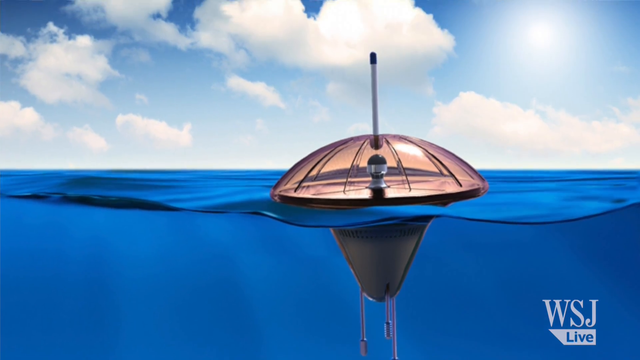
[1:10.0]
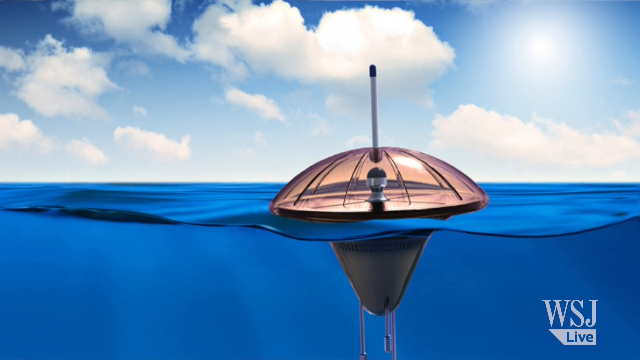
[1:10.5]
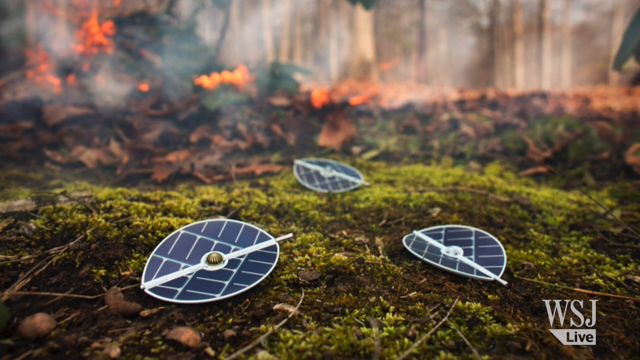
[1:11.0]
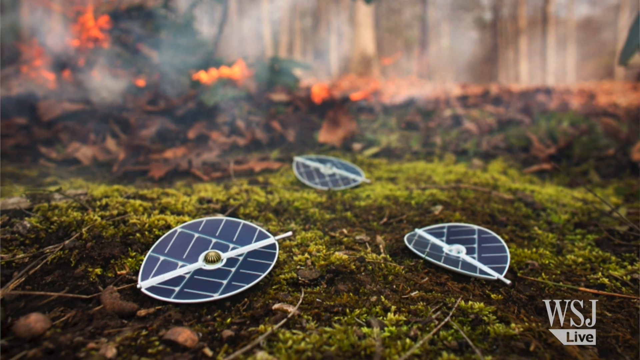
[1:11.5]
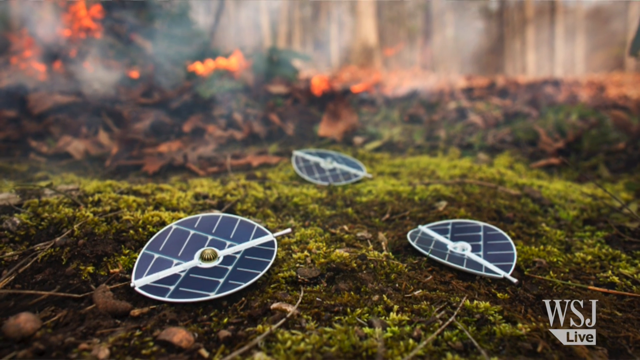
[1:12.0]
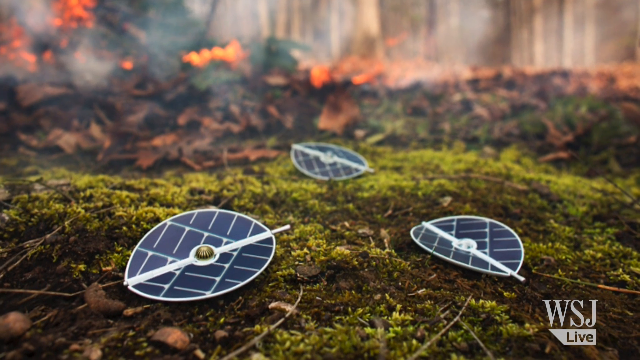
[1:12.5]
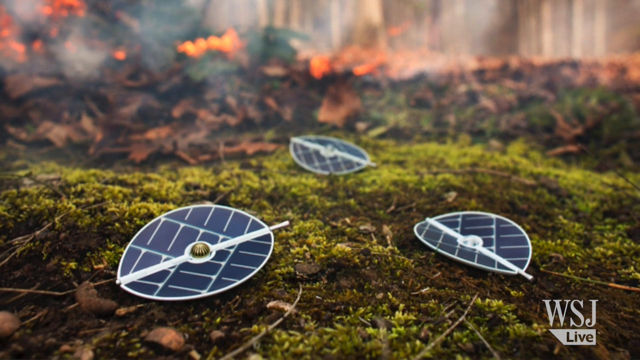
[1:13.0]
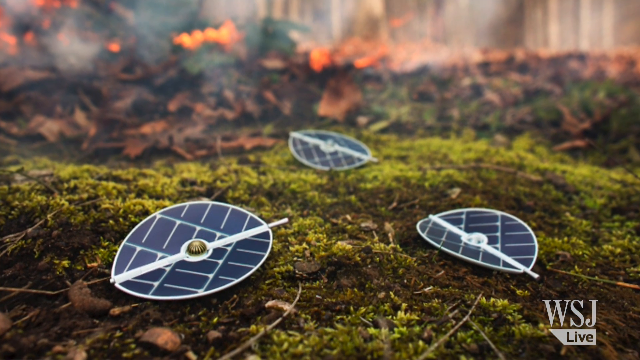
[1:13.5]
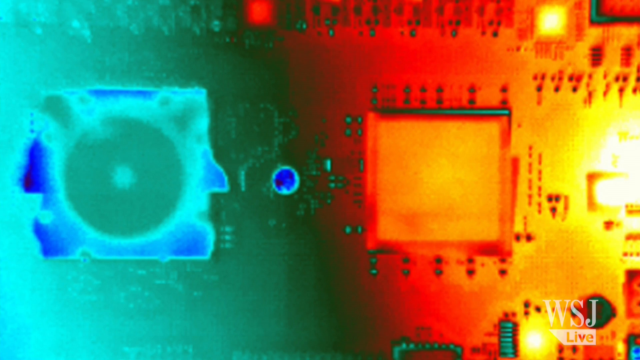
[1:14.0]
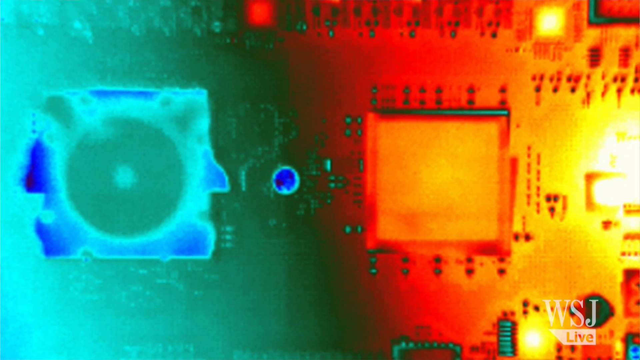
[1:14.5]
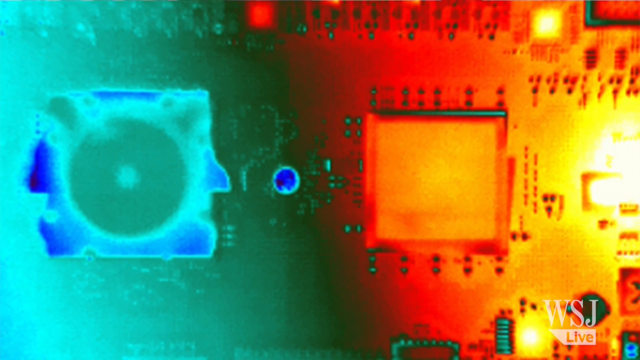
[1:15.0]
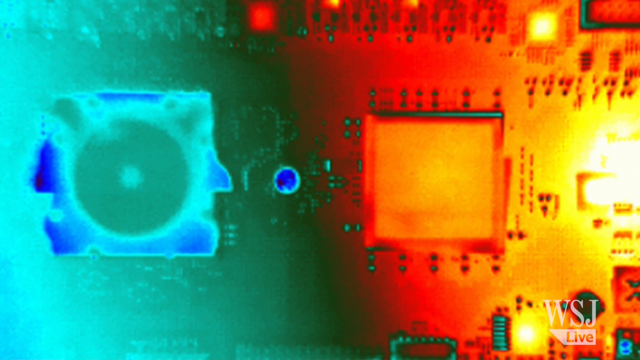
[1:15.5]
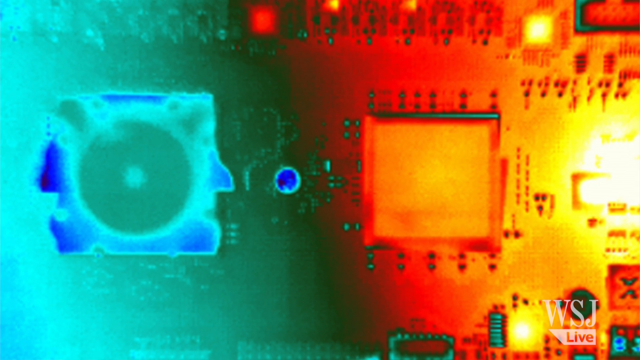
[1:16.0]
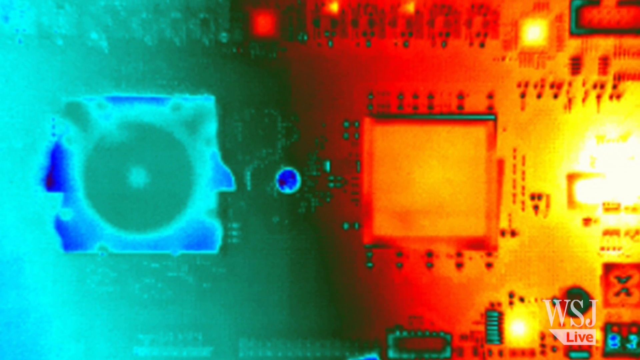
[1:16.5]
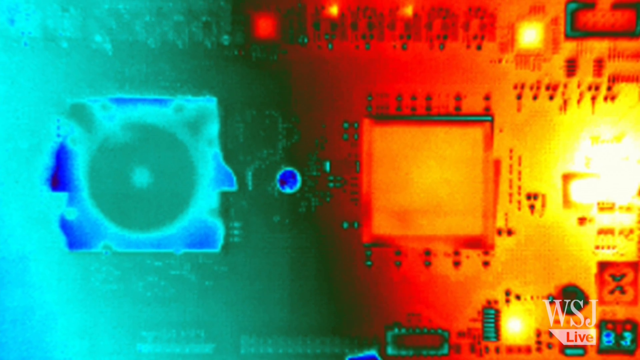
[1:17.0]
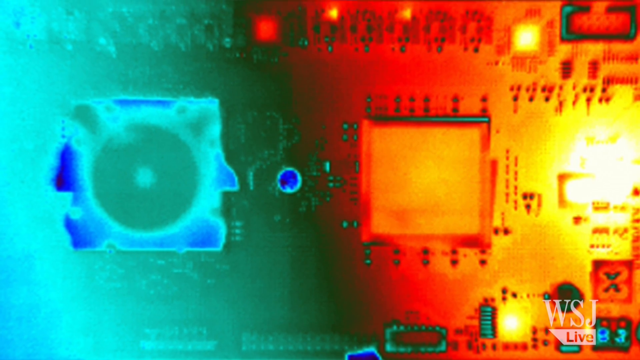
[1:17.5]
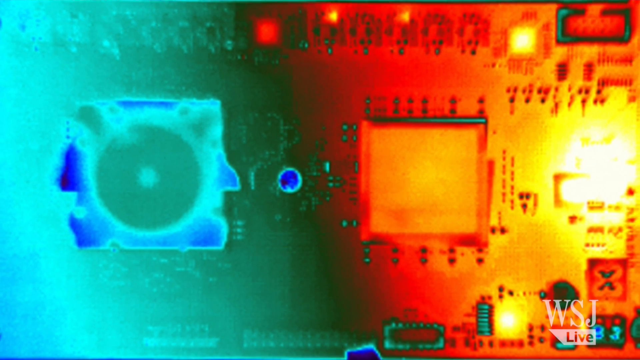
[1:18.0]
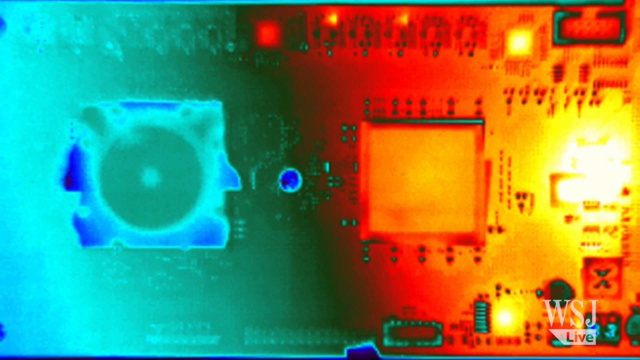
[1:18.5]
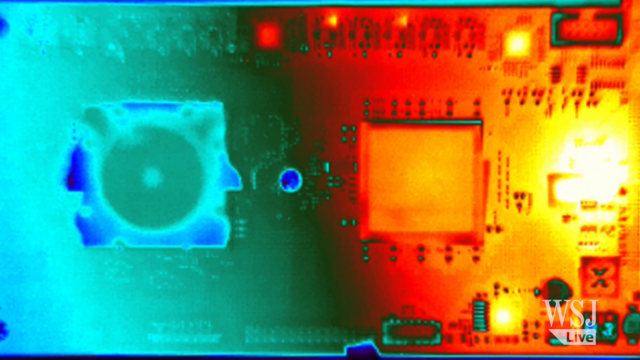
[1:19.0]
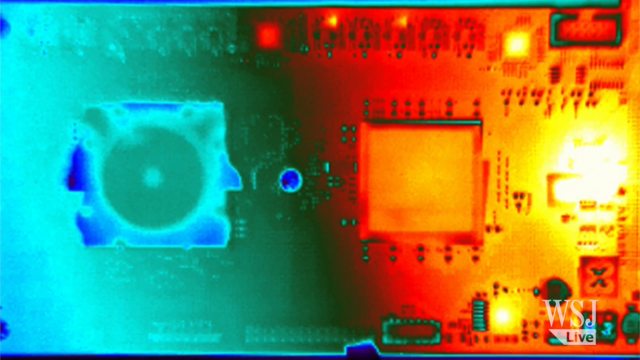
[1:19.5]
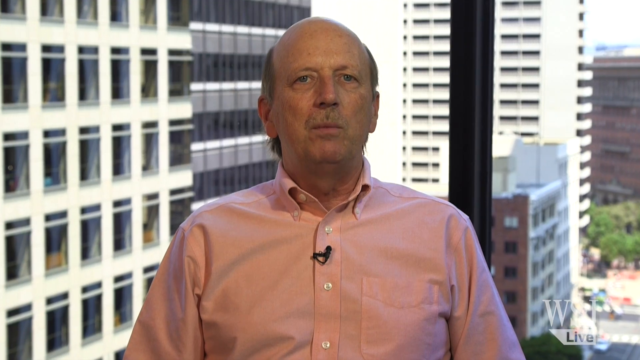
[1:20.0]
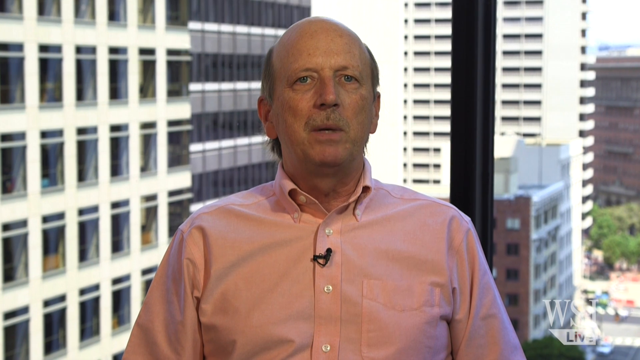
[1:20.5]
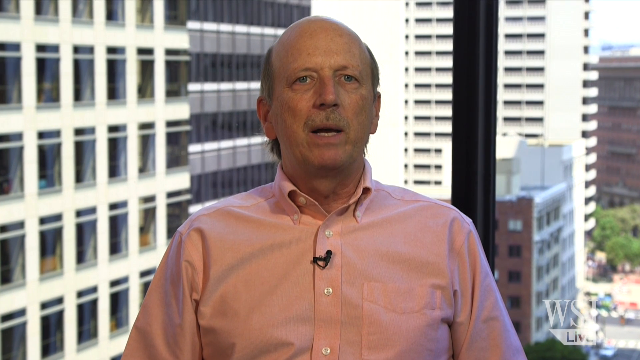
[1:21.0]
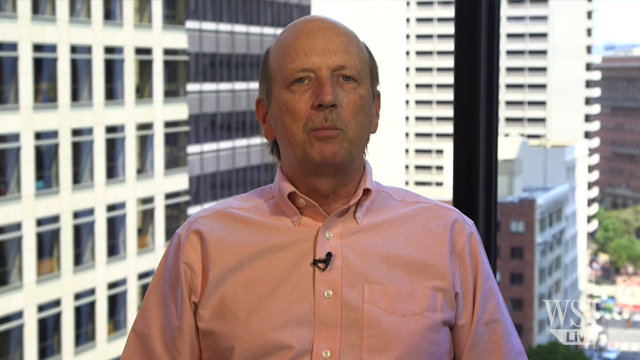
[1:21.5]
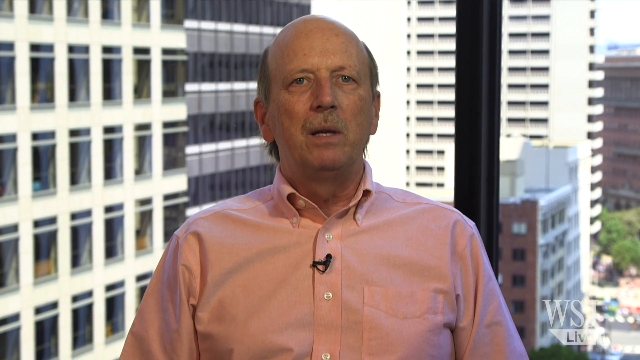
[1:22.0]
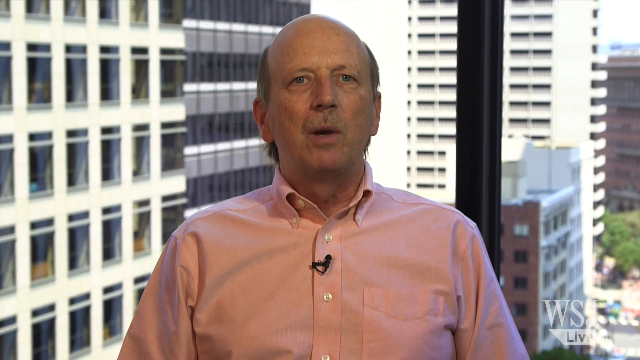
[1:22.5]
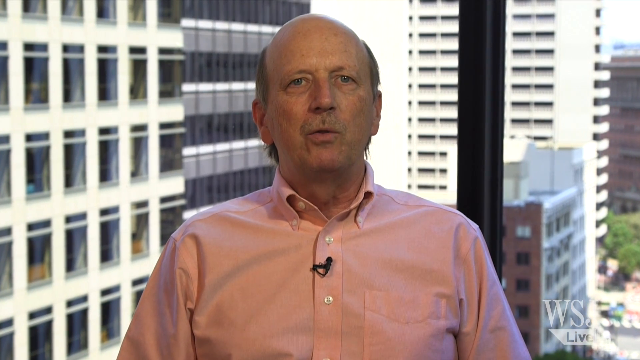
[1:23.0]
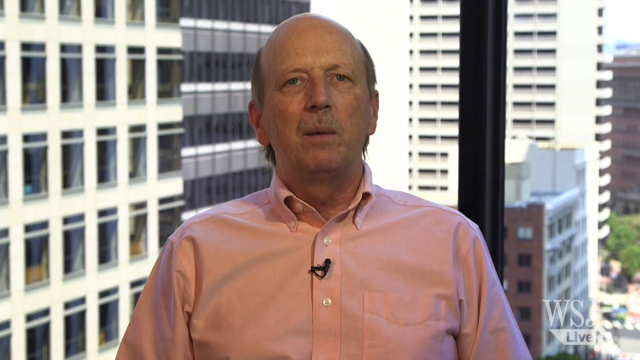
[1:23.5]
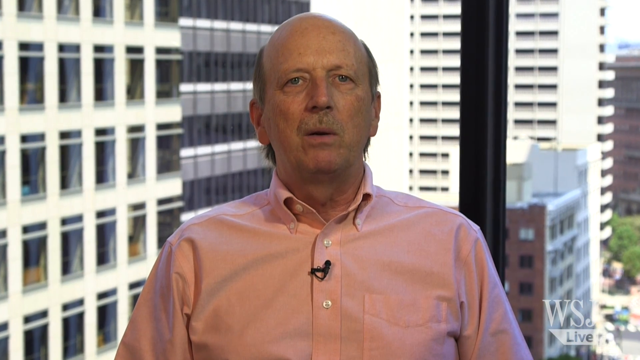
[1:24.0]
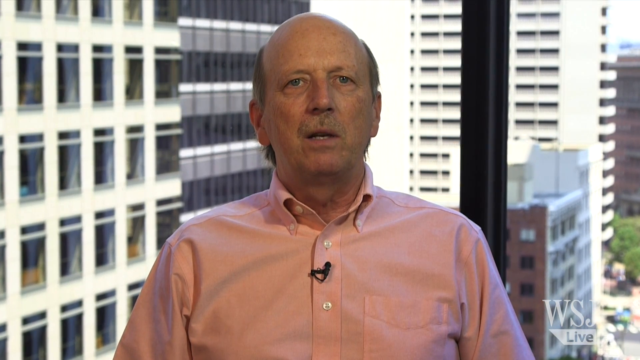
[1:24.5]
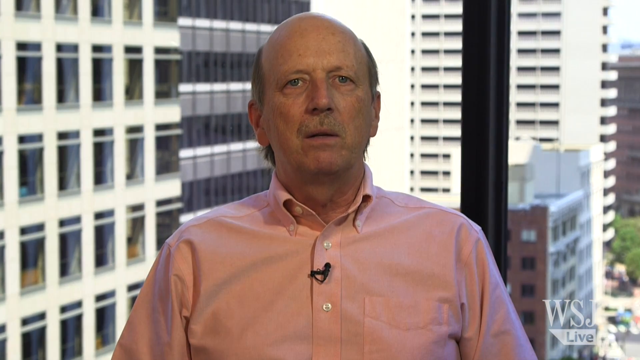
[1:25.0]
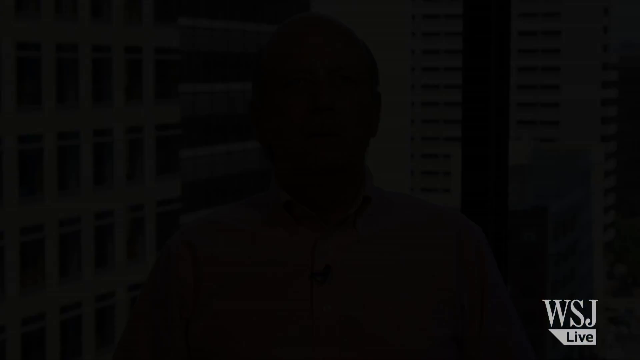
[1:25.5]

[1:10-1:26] Mr. Clegg, the assistant news editor, is shown with the chips and the IBM company. The chips are shown with how they are formed and what is inside and holding each one; each chip has four plates made of copper and magnets. A white ball with orange rubber is shown with many balls. Something like a spaceship is inside the water, and there are three areas in the field that look like they are spinning but are not. A chip is shown in the field in orange and greenish colours. Lastly the scene is in the company, where it looks like they are generating something; there are many desks and chairs but only three men working. The cover of each chip looks like a brain.